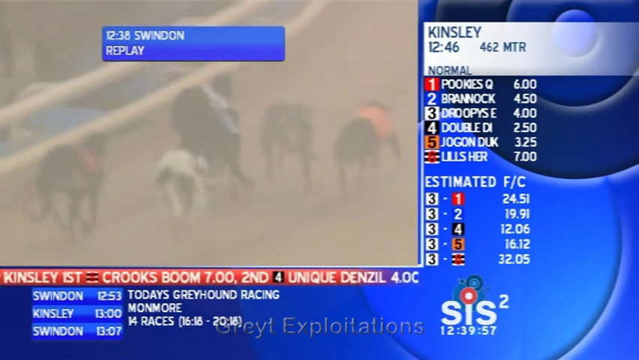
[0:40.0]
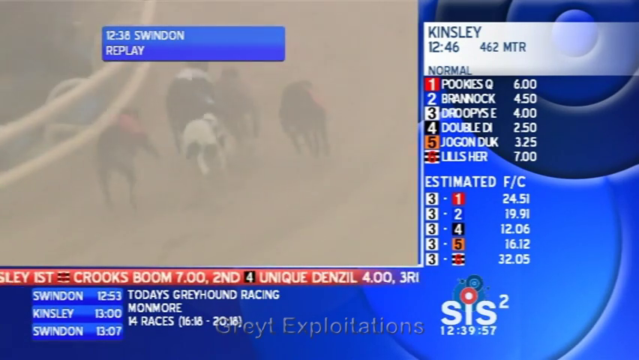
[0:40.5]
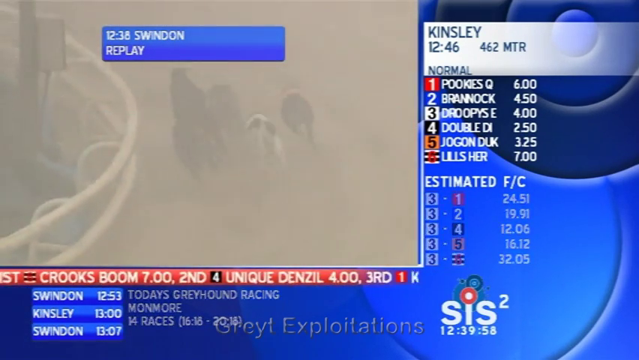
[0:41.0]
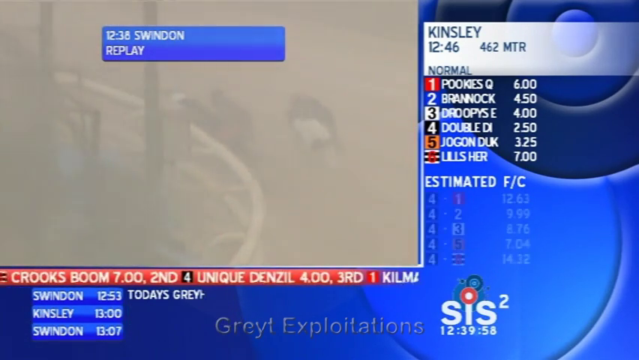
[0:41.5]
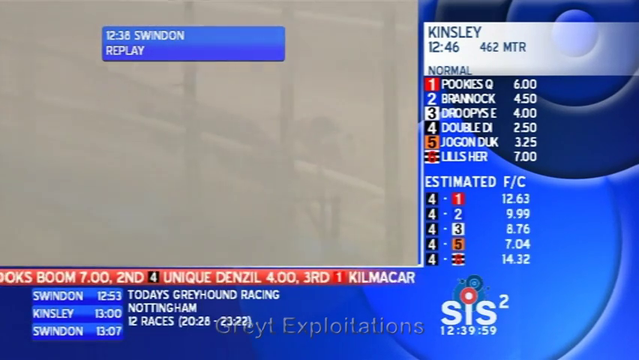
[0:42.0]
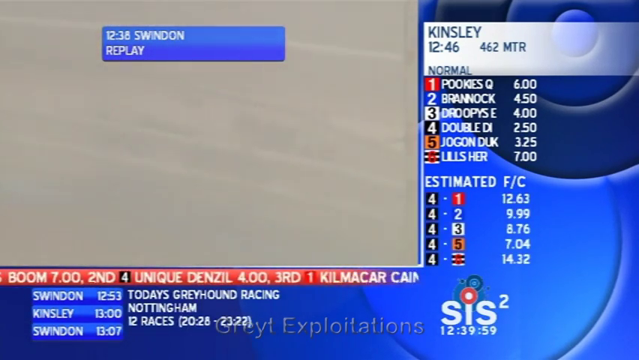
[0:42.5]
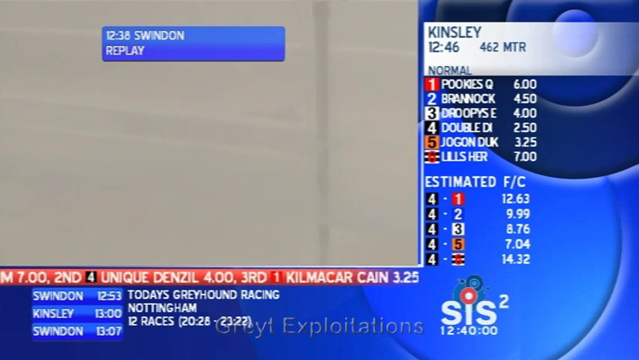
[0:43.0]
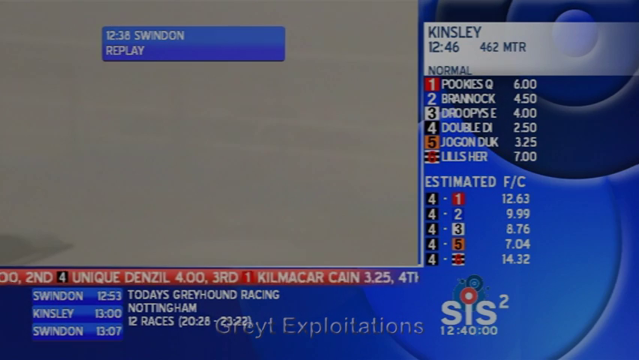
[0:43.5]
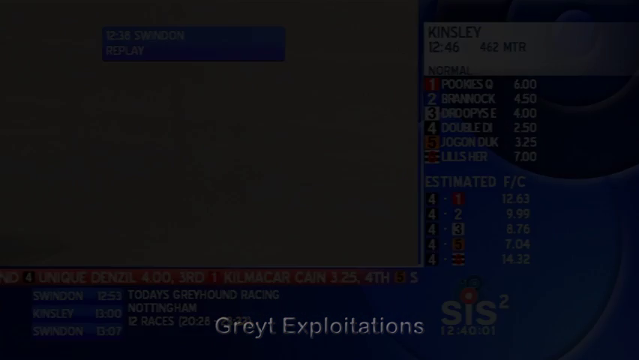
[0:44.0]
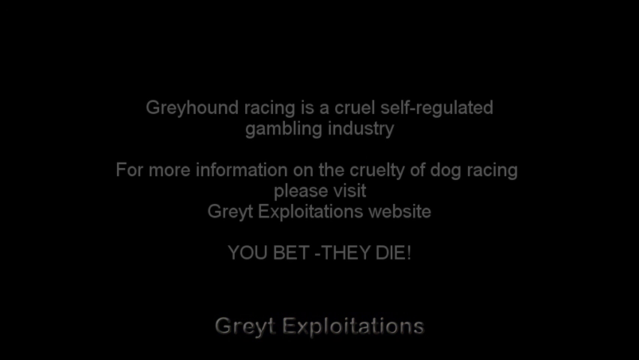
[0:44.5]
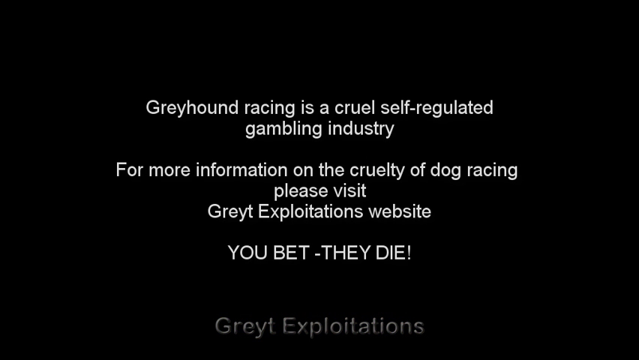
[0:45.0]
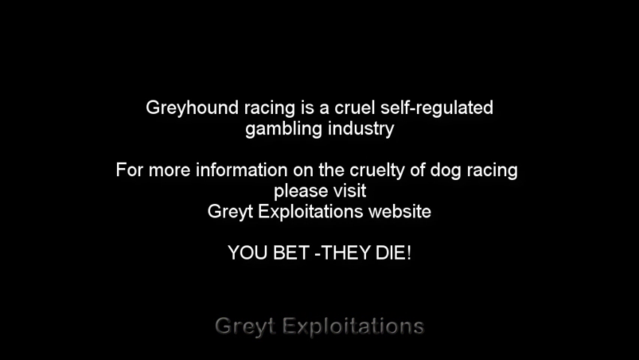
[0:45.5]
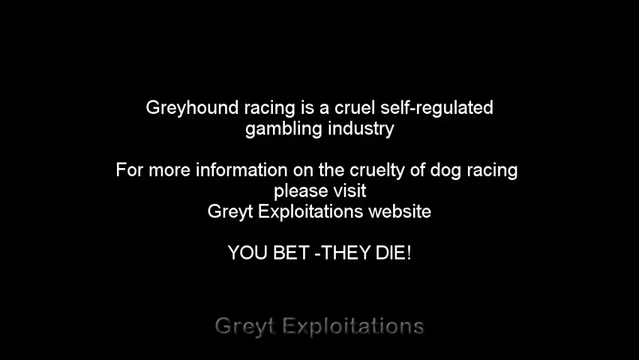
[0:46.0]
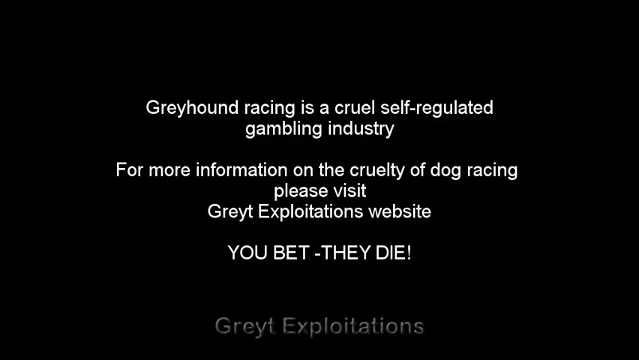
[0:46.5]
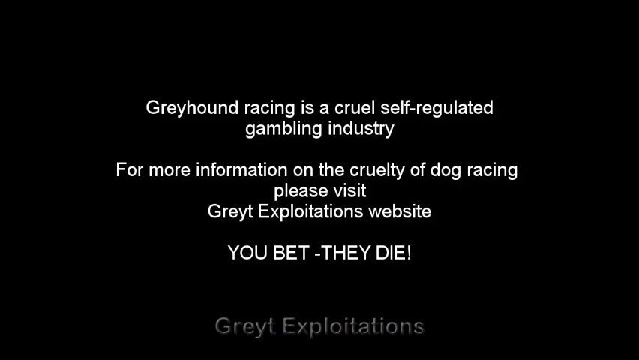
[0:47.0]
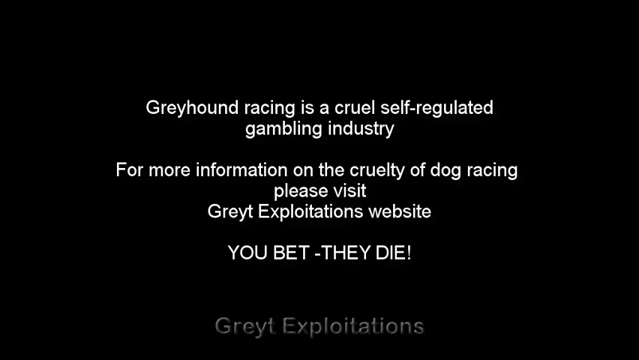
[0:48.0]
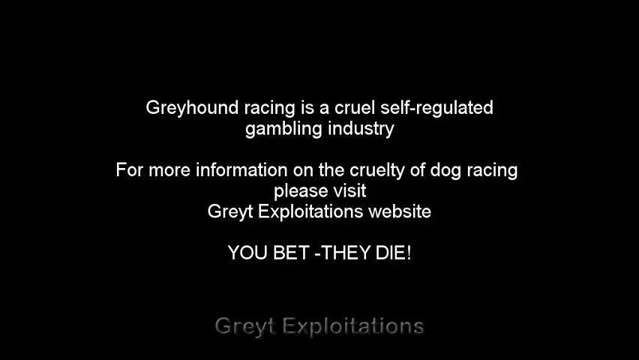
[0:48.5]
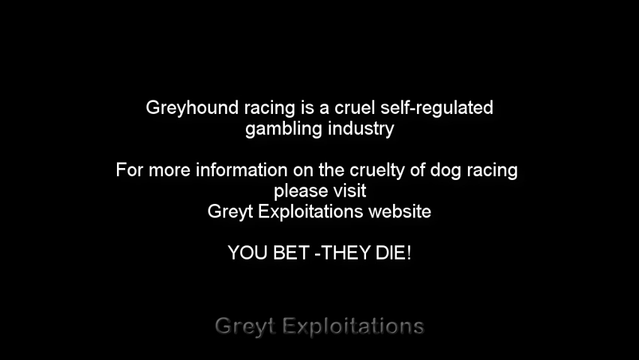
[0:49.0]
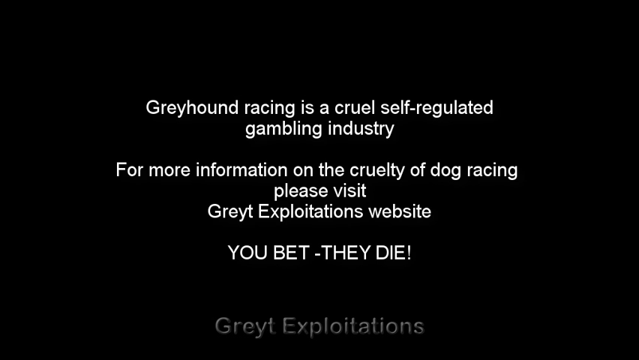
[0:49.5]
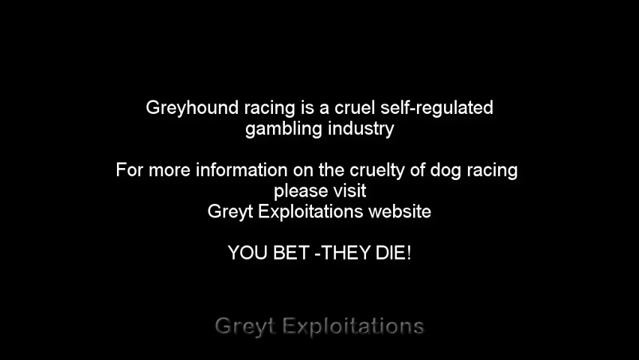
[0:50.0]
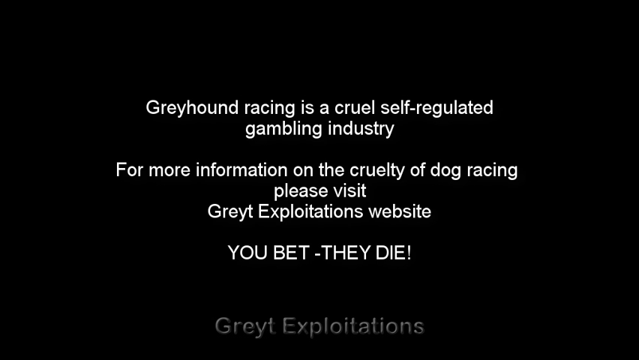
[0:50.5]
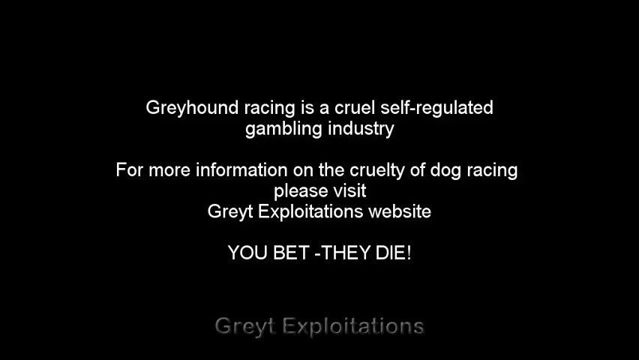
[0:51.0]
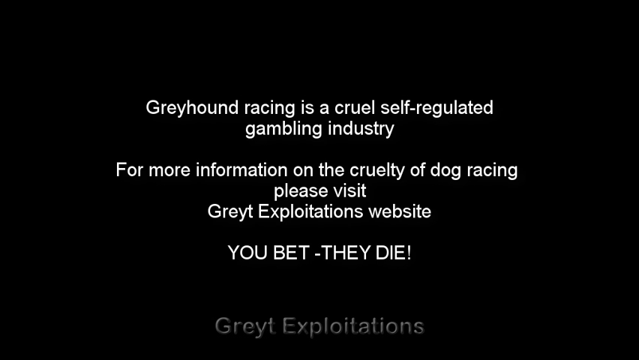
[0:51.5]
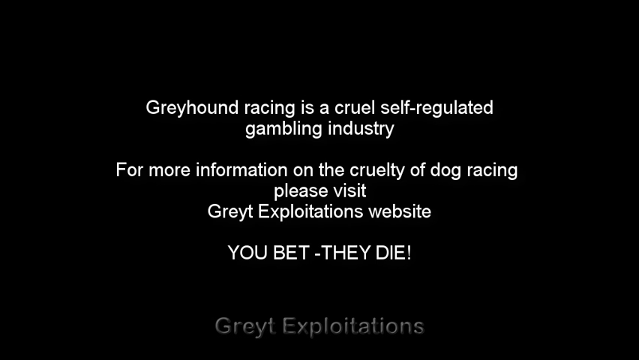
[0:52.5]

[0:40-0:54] In thick fog, the greyhounds keep running very fast to the left around the track, and as the camera turns the corner it becomes increasingly difficult to see them. As the video ends, a message in white text appears on a black background, saying "greyhound racing is a cruel self-regulated gambling industry for more information on the cruelty of dog racing please visit". The words "great exploitations" appear at the very bottom of the screen.